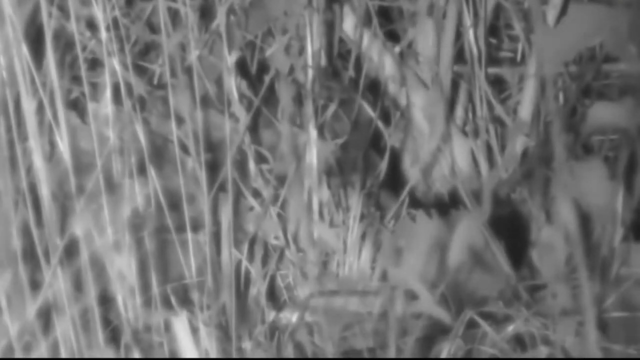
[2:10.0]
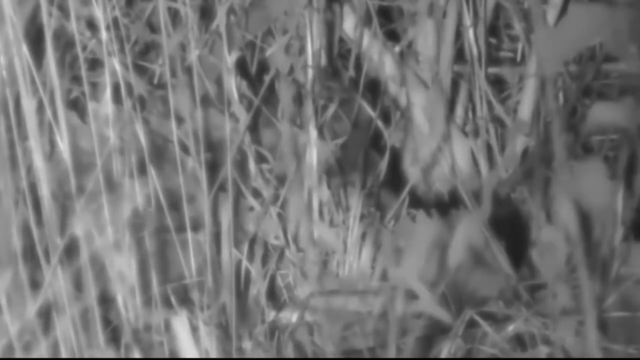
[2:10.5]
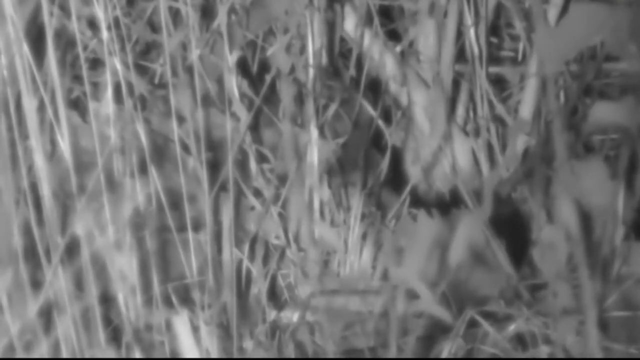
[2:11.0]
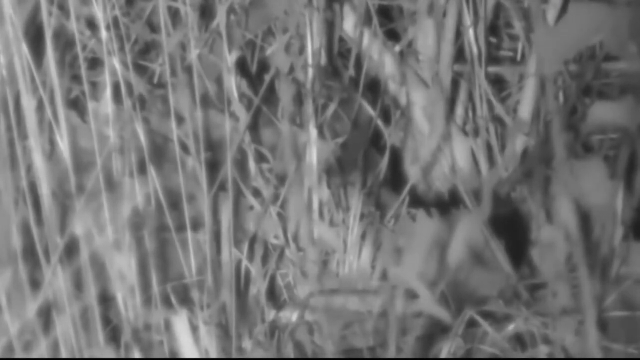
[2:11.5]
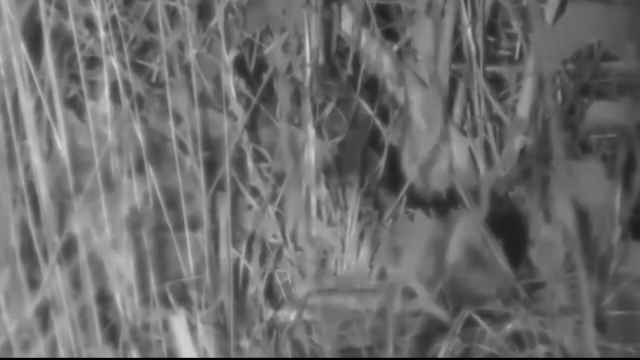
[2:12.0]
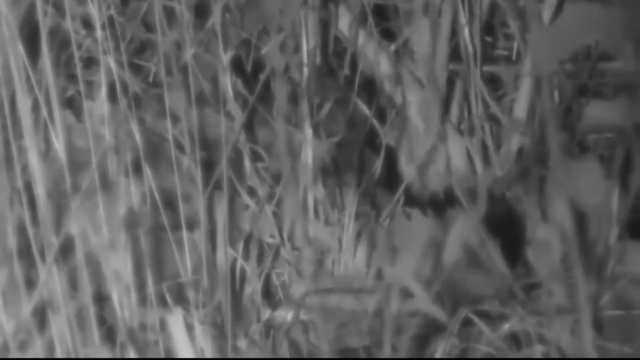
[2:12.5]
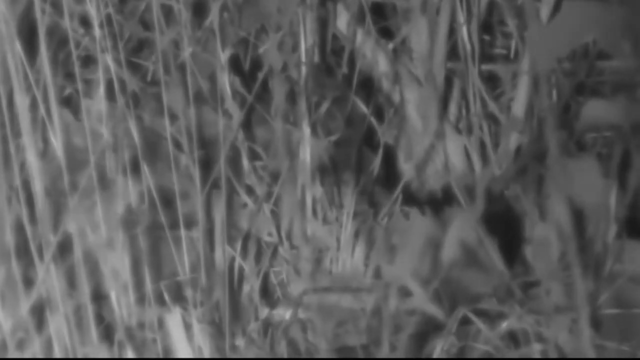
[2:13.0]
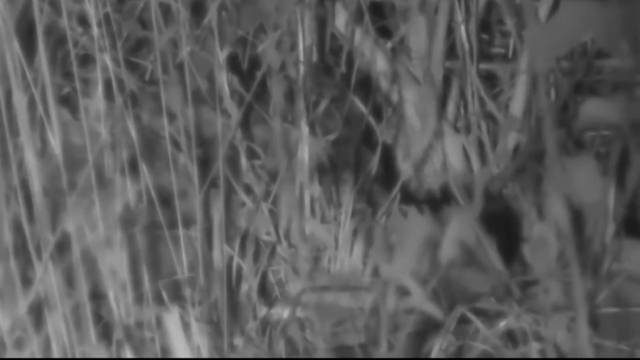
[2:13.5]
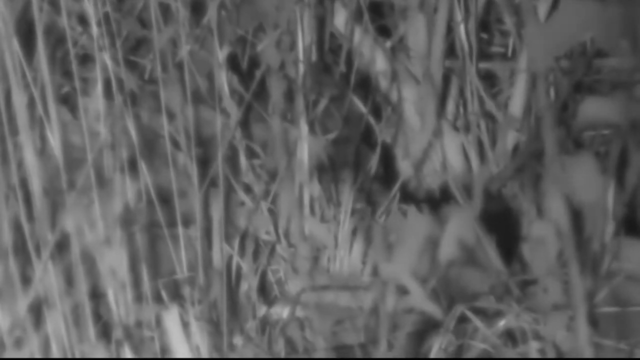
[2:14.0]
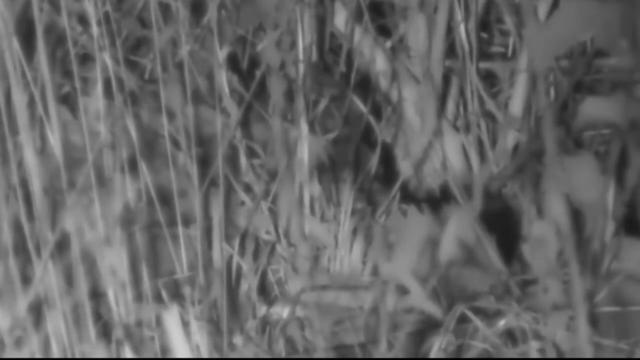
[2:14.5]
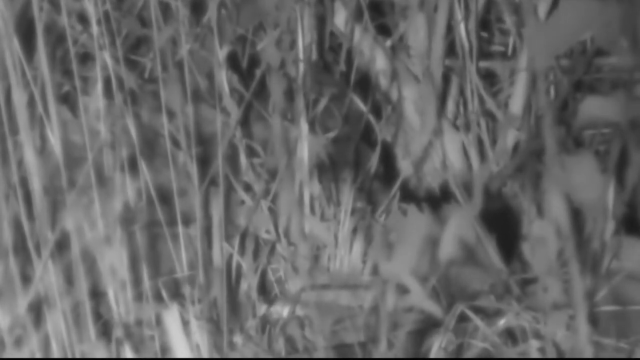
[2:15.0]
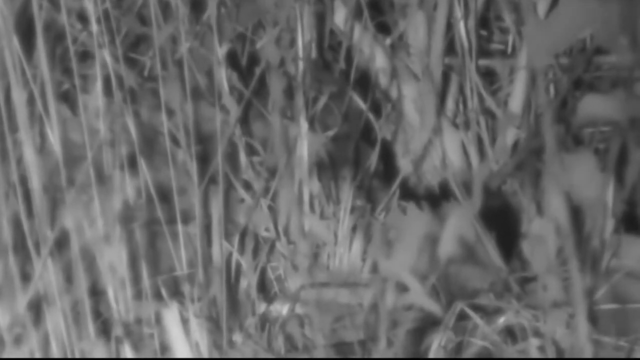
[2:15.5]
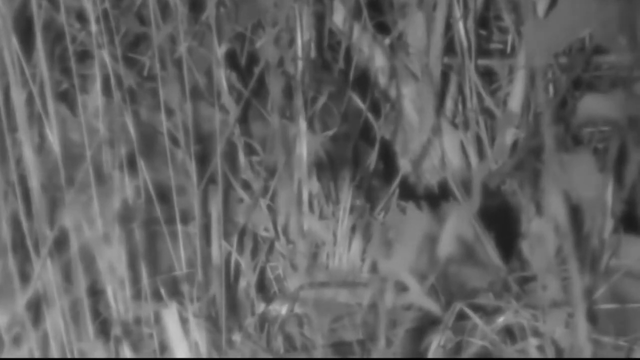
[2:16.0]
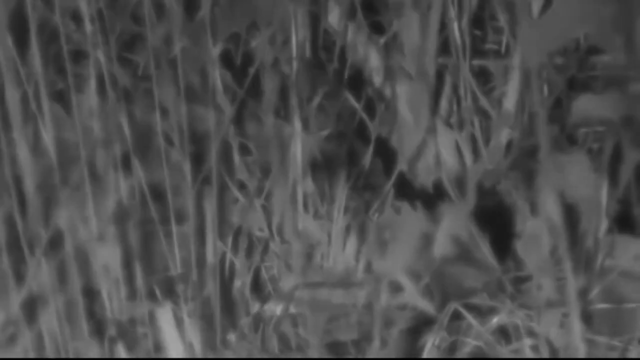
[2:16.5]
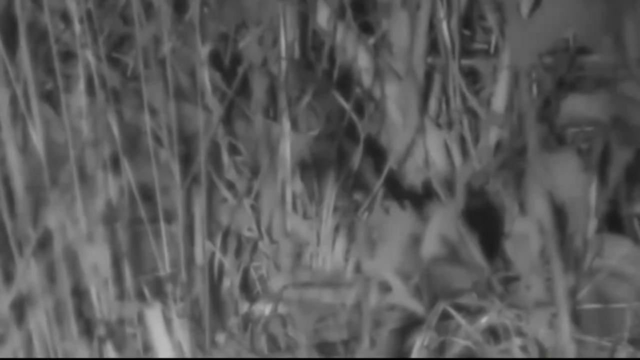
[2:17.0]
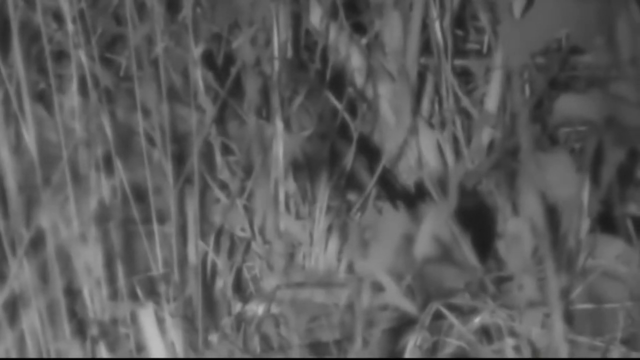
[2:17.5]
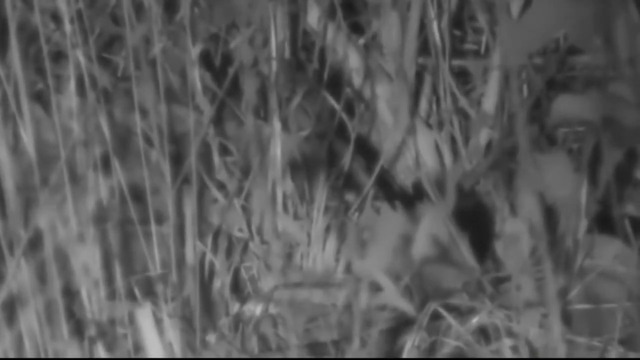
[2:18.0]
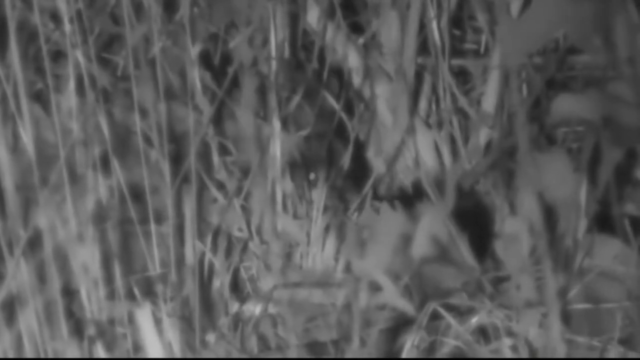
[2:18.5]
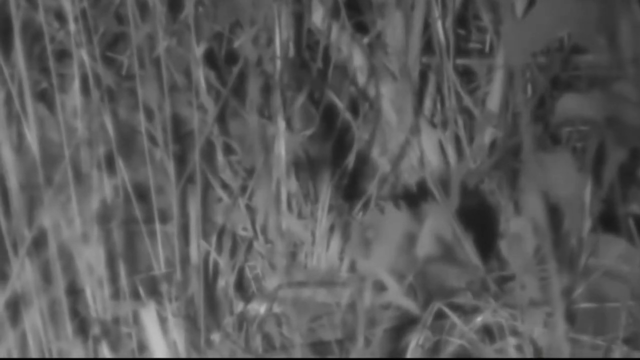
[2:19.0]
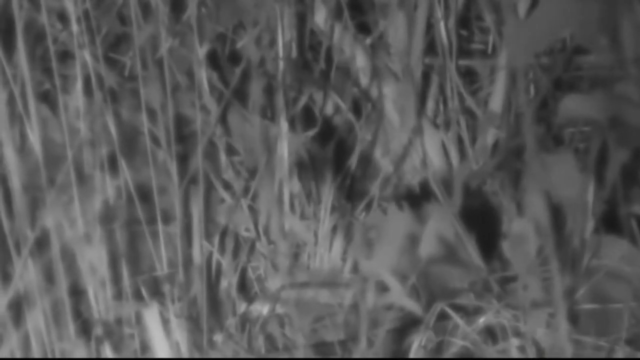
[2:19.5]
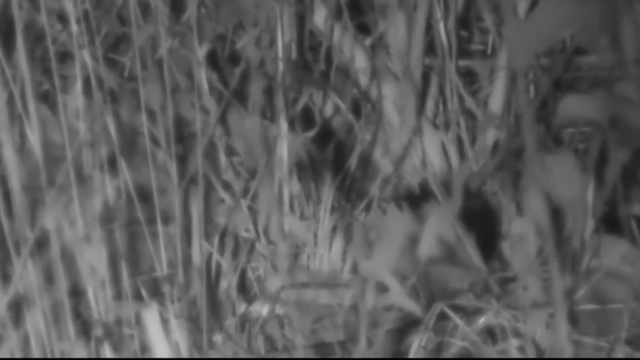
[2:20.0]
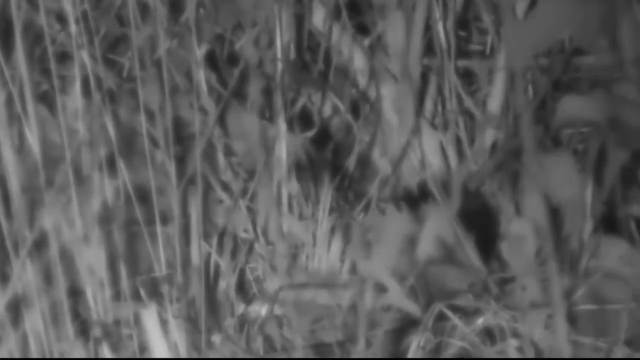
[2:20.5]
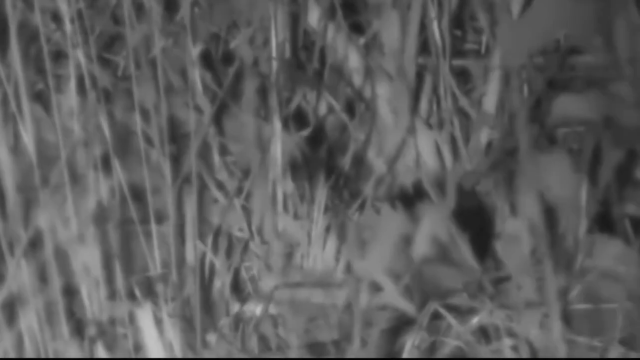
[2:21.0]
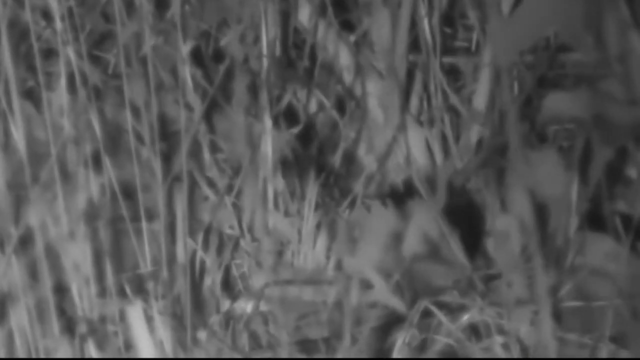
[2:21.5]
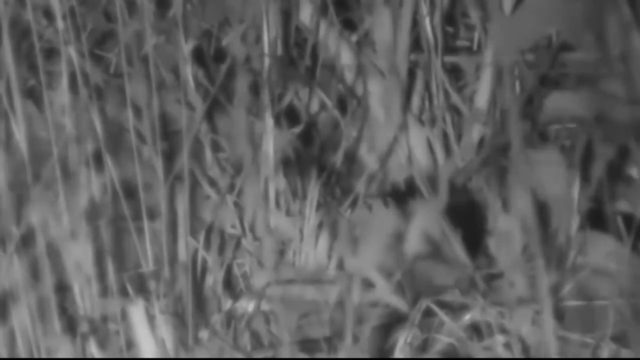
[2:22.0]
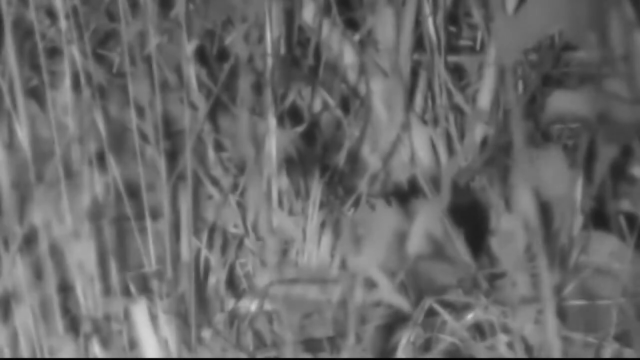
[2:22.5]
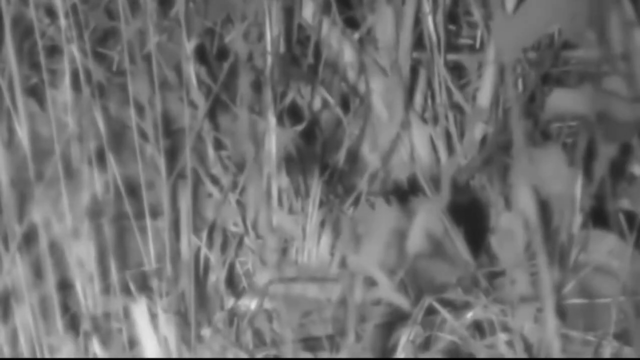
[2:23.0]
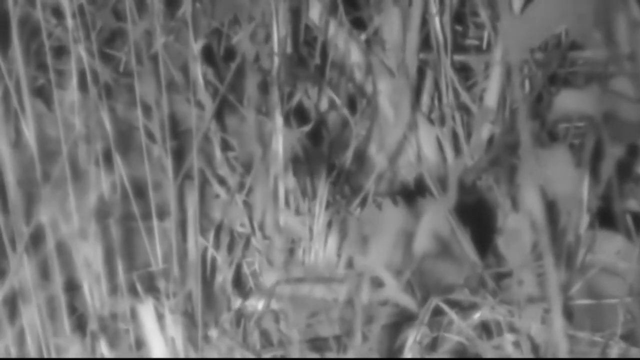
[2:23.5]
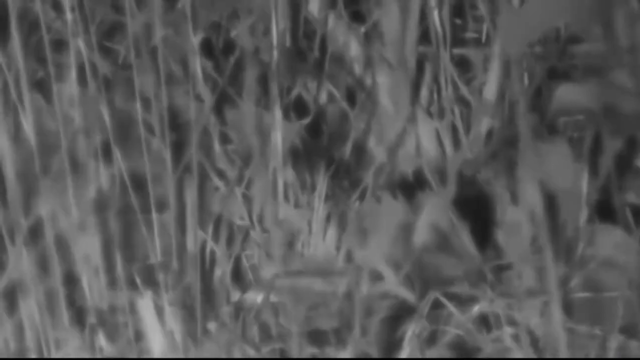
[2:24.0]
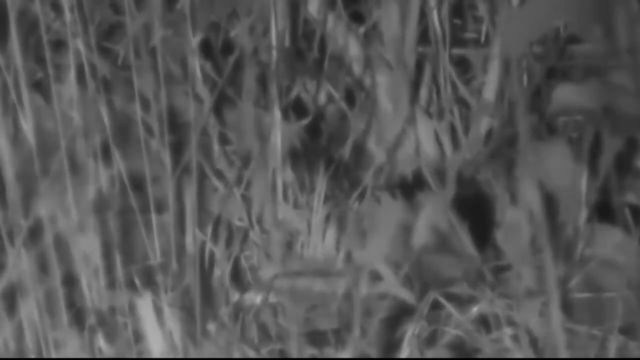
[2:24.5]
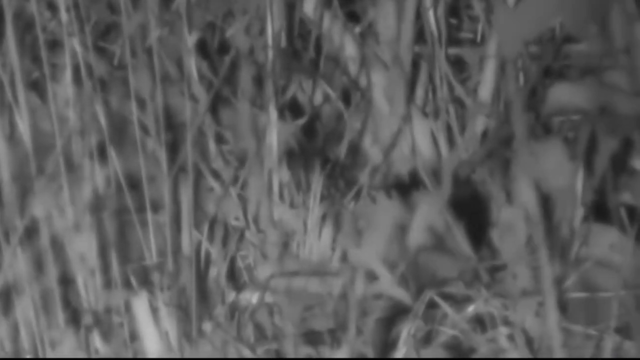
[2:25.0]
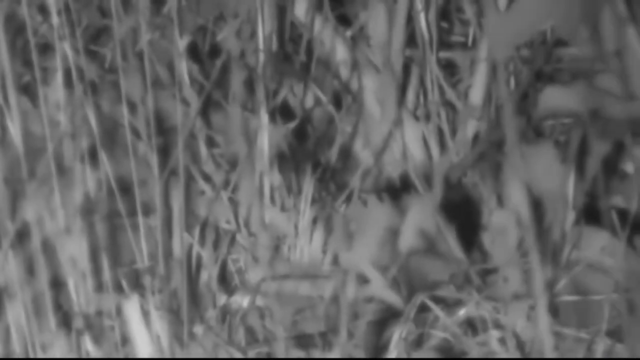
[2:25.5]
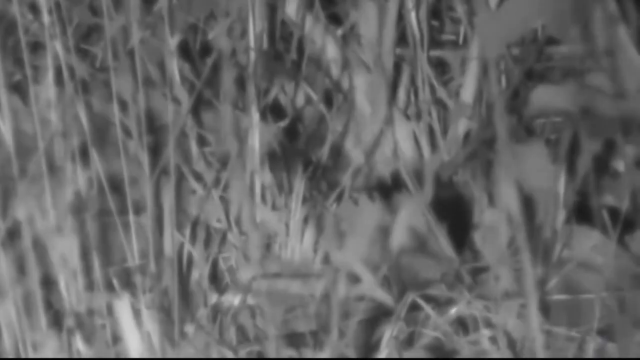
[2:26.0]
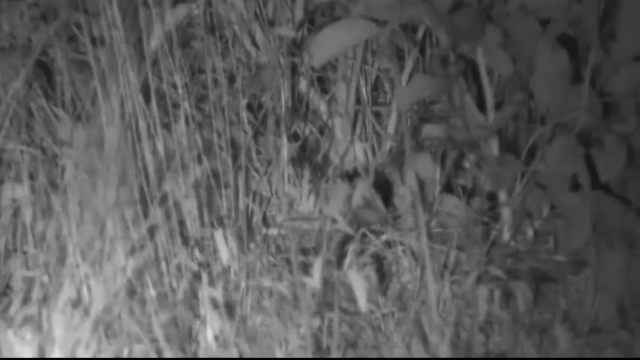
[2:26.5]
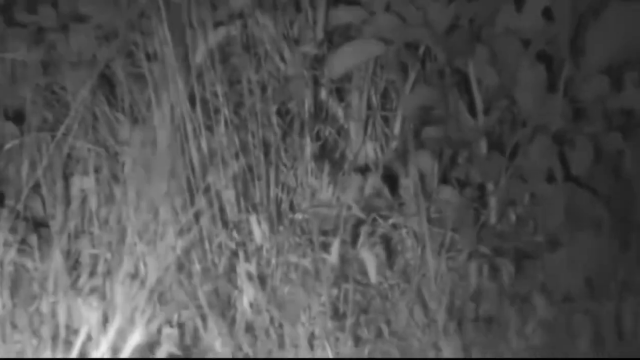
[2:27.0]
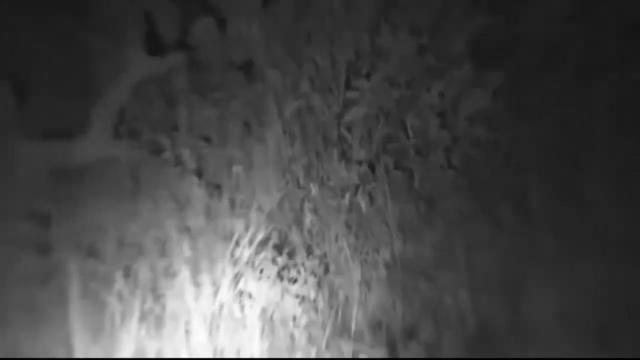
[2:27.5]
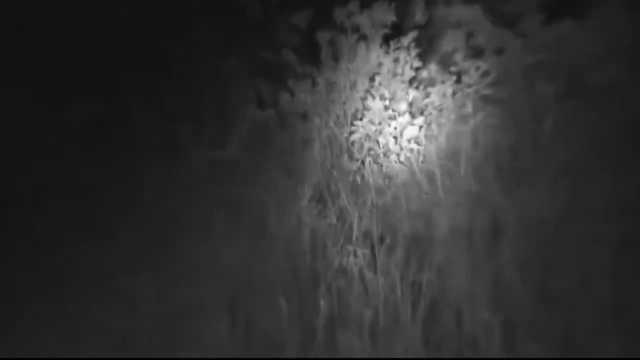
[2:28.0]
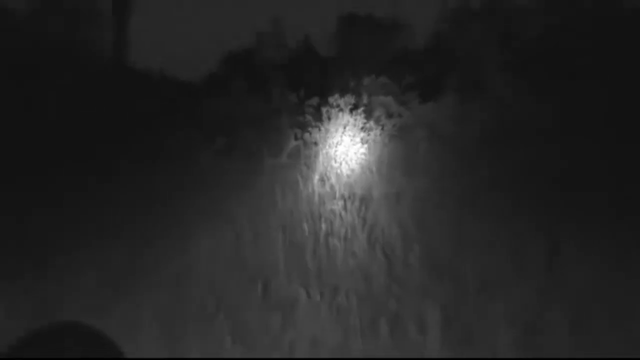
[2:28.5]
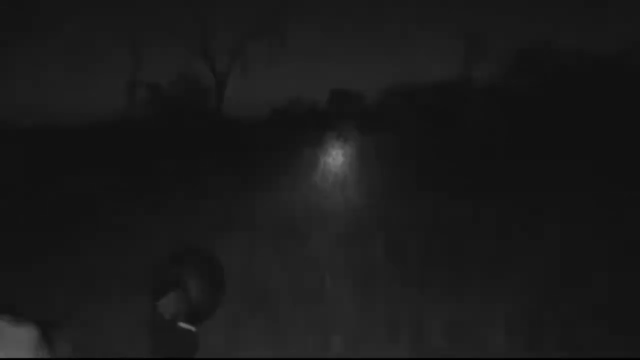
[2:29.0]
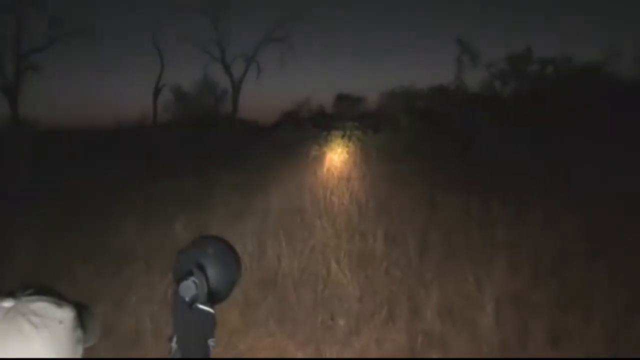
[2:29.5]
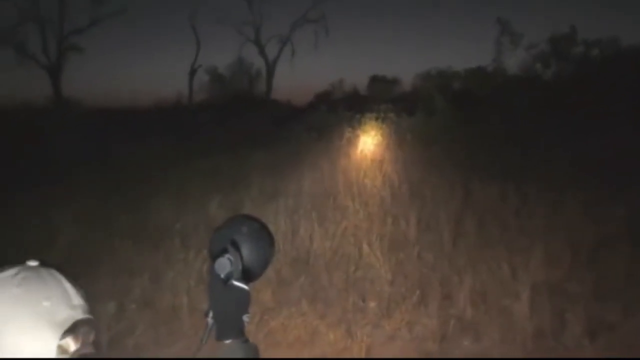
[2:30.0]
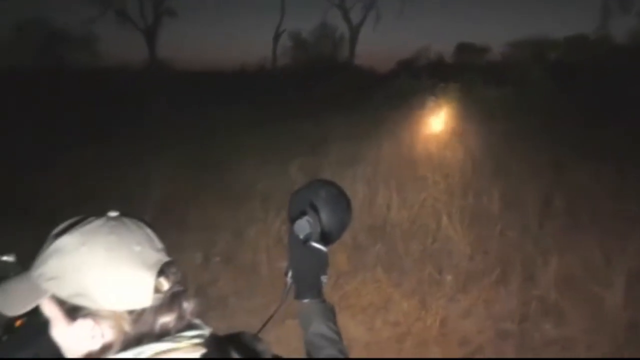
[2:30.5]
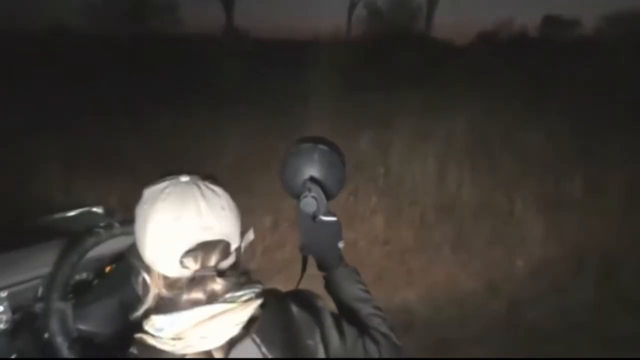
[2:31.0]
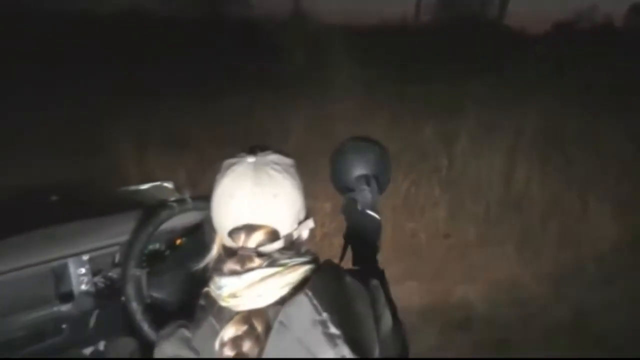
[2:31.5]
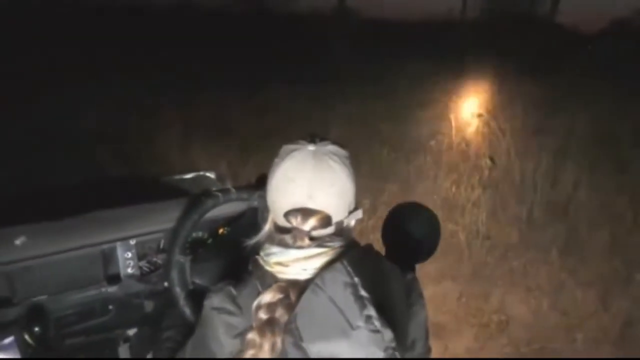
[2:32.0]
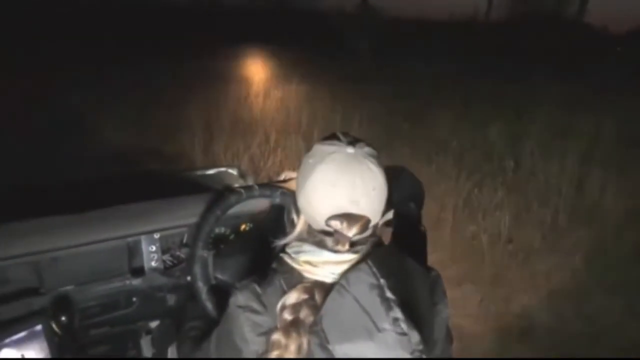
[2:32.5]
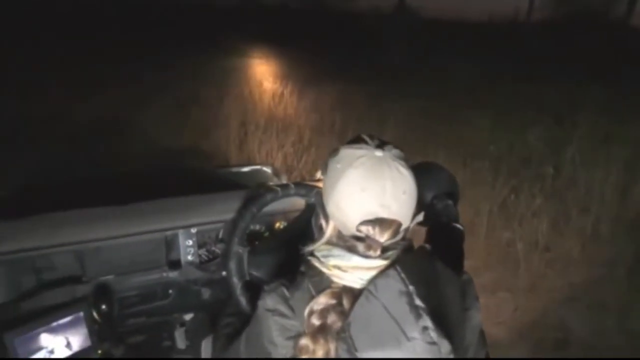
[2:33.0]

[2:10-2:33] The animal moves in the background but stays hidden without showing itself. Then a lady is shown, apparently driving a jeep and shining a light and a camera from far away. She wears a white cap and what looks to be a hoodie, and the steering wheel of the jeep is on the right side. The strange faces are still visible.